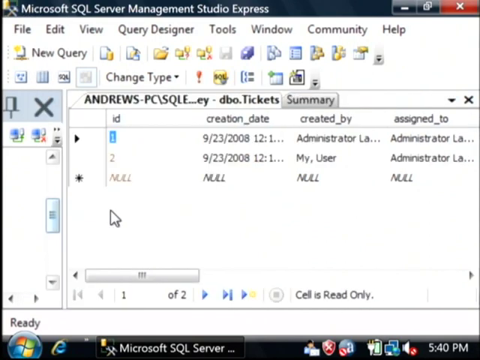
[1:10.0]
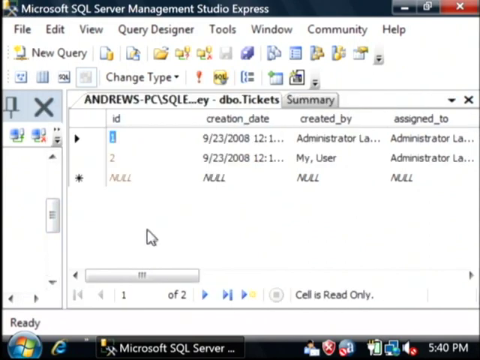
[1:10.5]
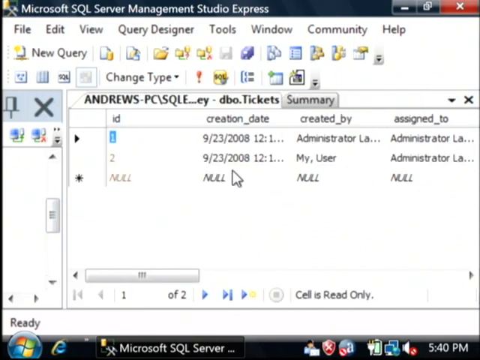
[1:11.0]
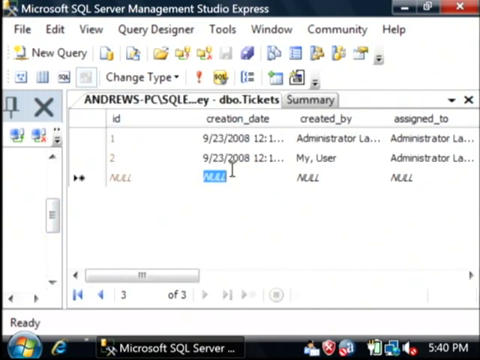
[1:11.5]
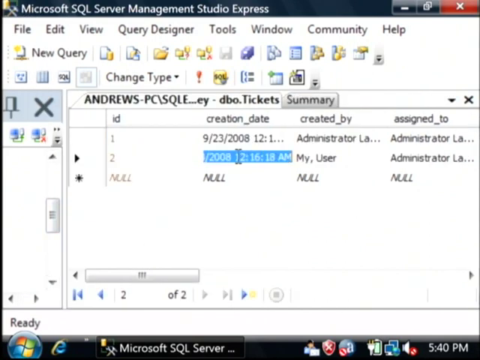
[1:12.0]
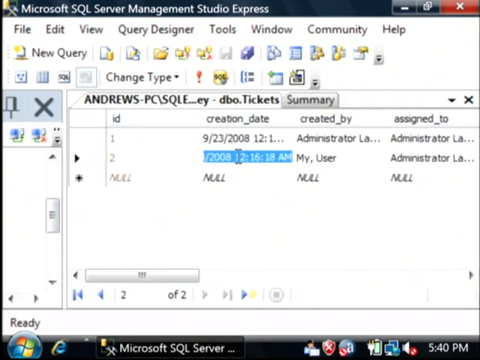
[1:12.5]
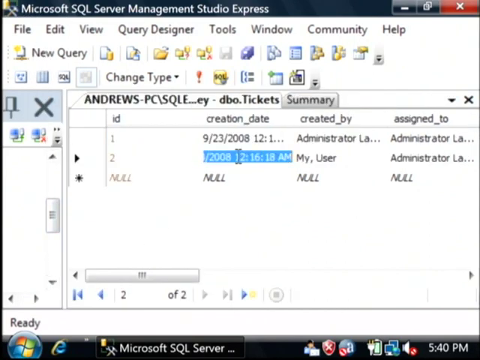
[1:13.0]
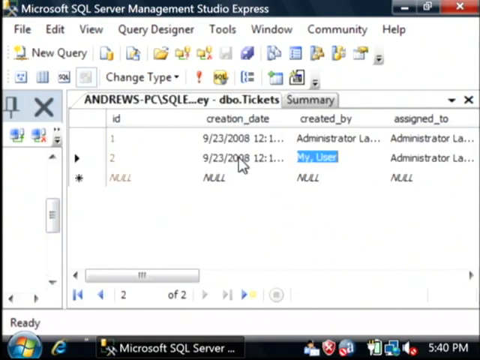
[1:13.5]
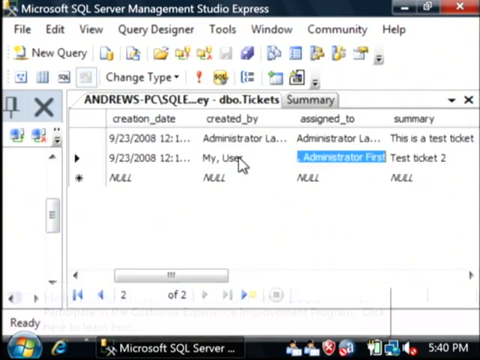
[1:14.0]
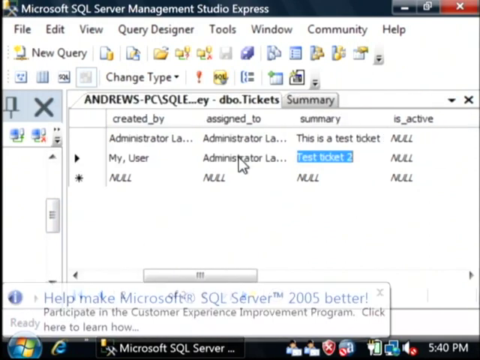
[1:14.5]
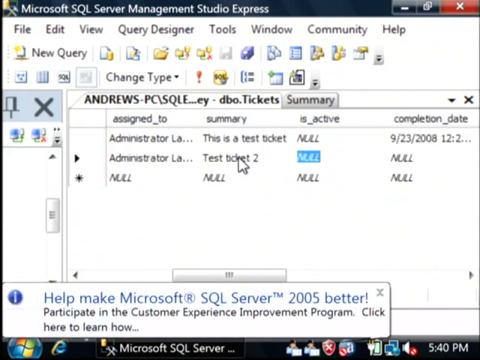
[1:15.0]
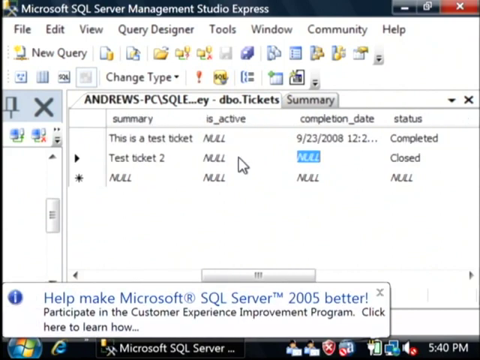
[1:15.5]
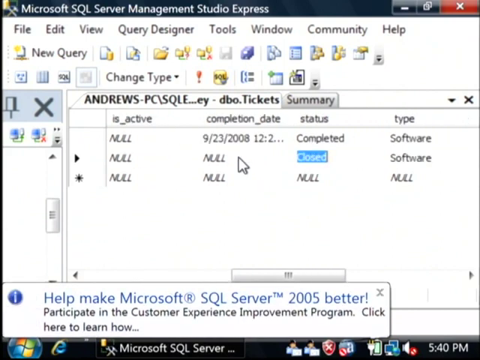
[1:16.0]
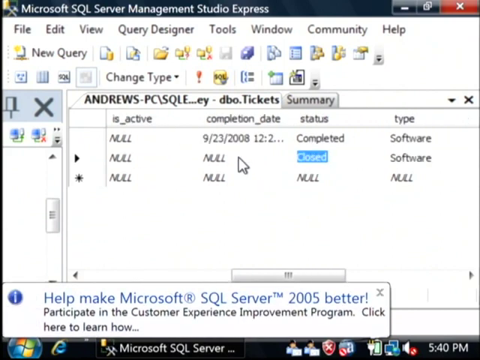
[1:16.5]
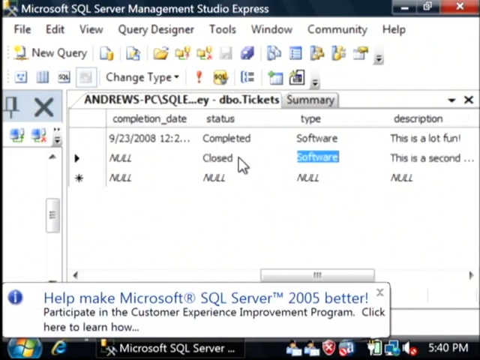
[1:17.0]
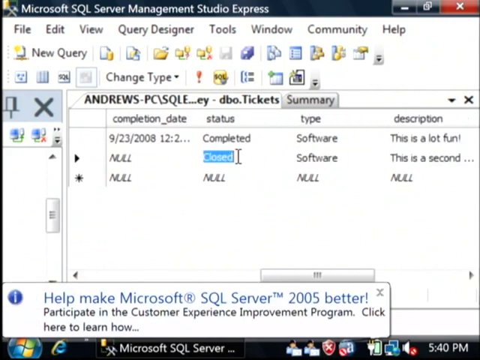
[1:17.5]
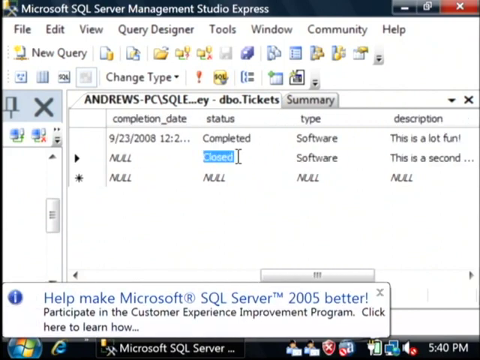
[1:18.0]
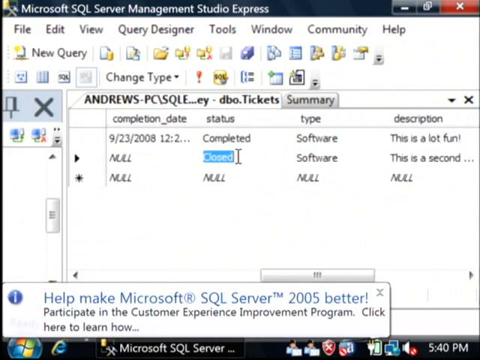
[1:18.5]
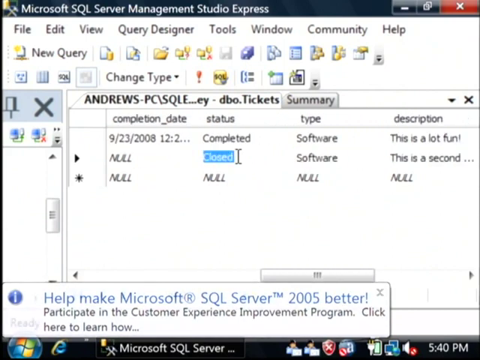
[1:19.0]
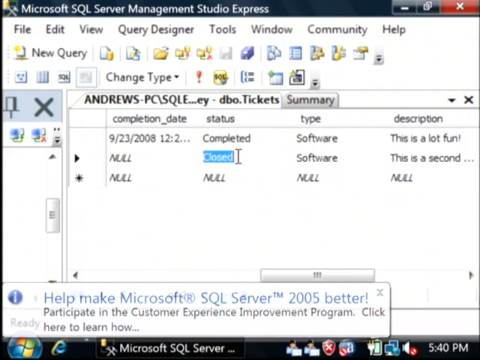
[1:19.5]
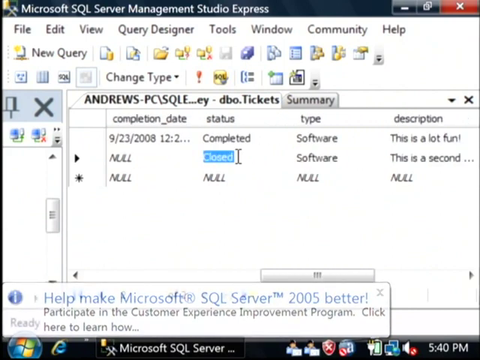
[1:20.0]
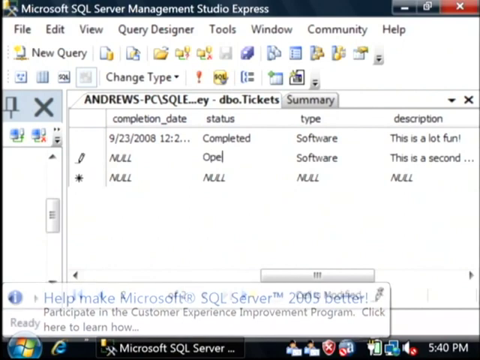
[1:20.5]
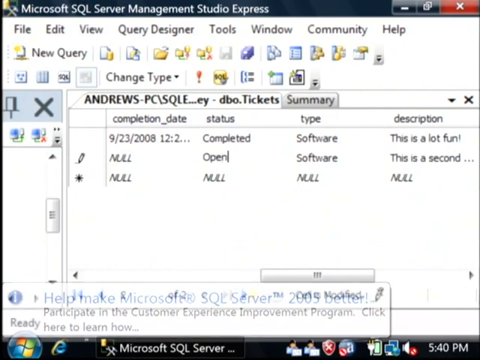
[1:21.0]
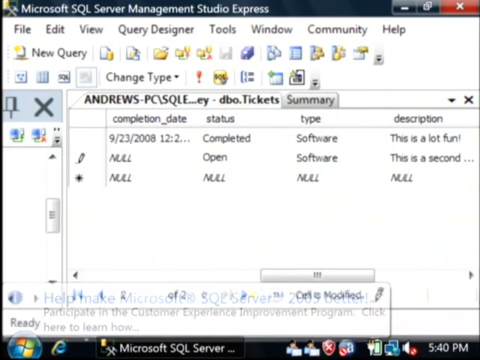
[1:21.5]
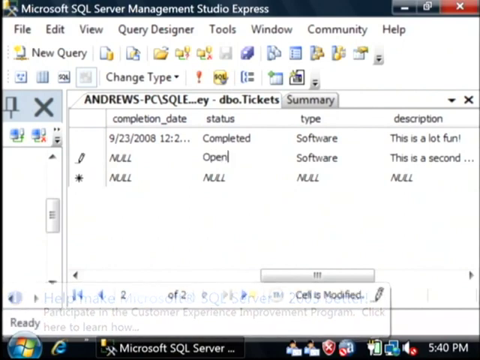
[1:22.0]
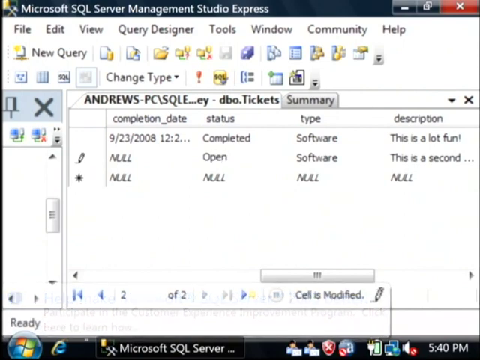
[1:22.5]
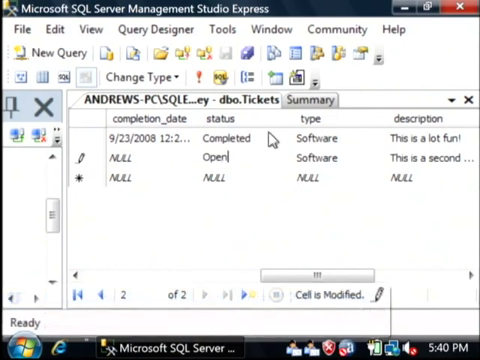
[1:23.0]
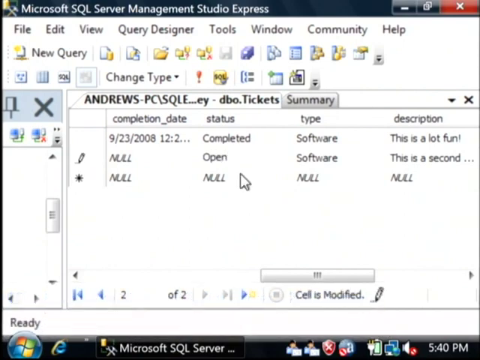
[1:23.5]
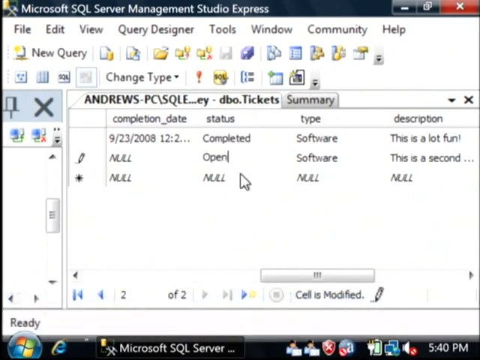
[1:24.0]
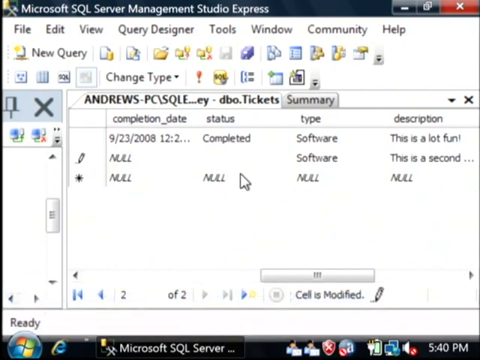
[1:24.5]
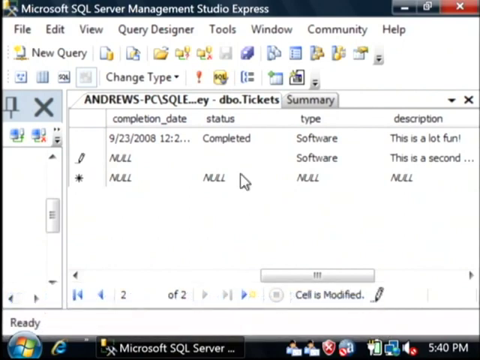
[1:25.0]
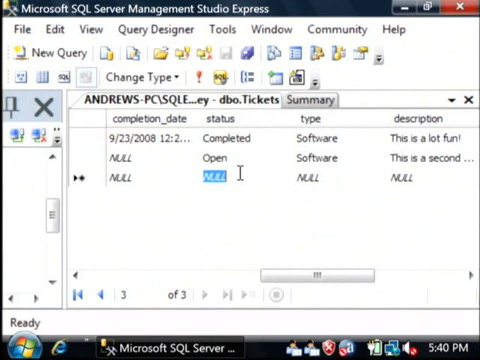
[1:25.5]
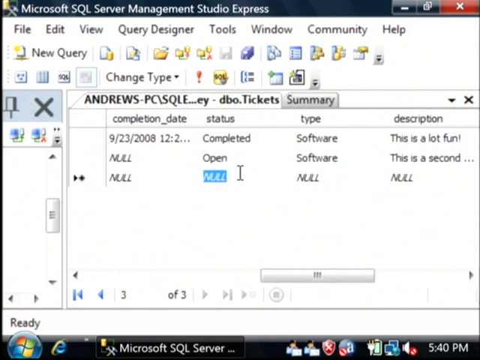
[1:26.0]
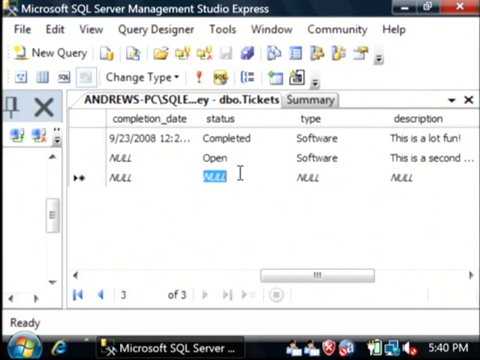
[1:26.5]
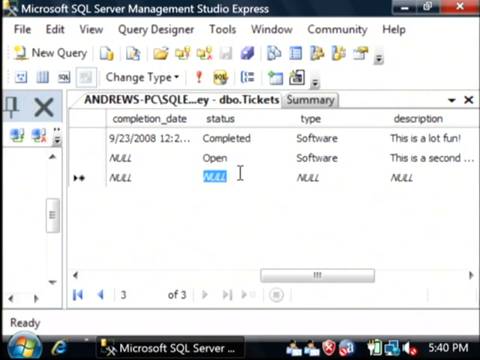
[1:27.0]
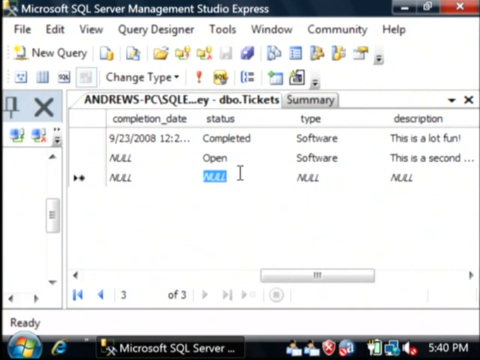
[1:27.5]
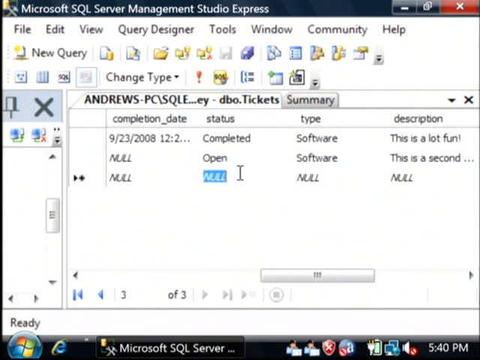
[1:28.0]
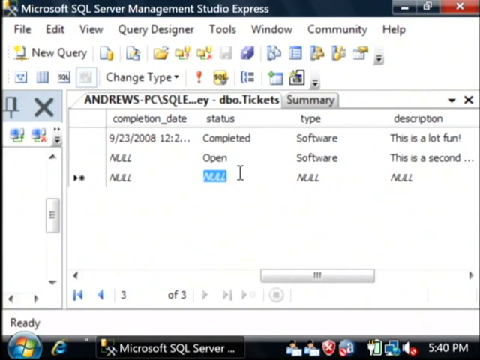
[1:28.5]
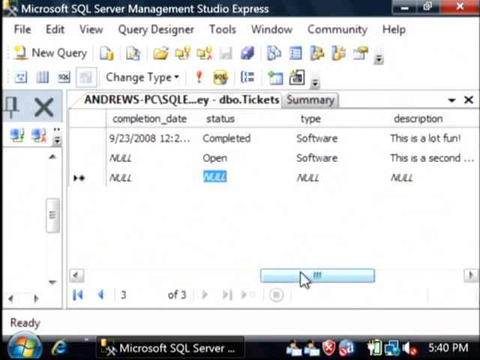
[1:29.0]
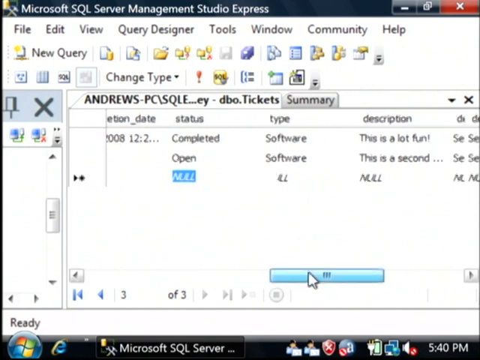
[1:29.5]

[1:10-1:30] The screen is recorded while the user works in Microsoft SQL Server Management Studio with a database table called Tickets open. The left-hand pane has been made slightly smaller so the right window, which shows the table summary, is larger. The user interacts with the columns in the table by selecting rows and views the columns by moving the horizontal scroll bar below, seemingly looking through each of the columns to find something. At the column called status, the user edits one of the rows, changing it from closed to open by typing it in manually, then selects the row below it, which says null and is highlighted in blue.